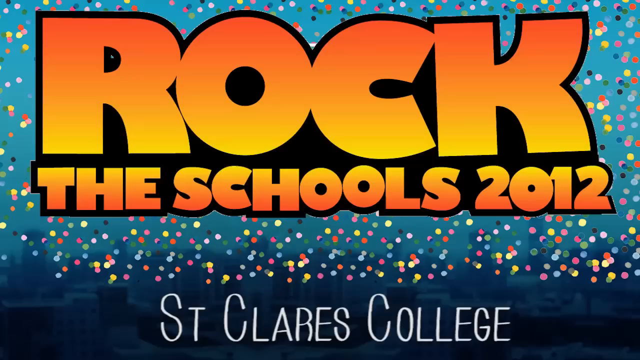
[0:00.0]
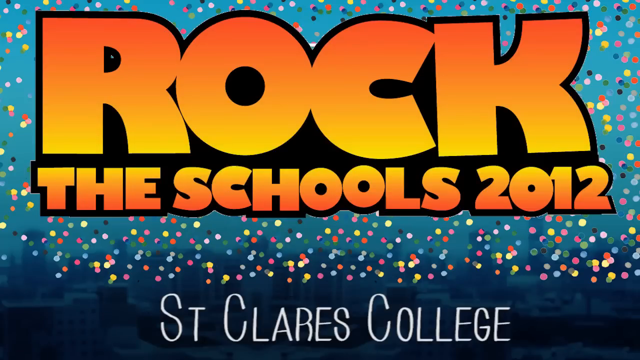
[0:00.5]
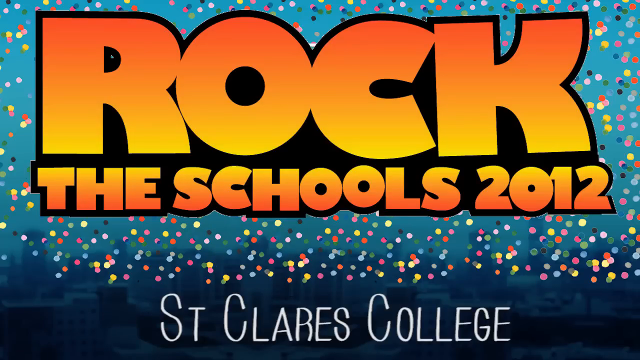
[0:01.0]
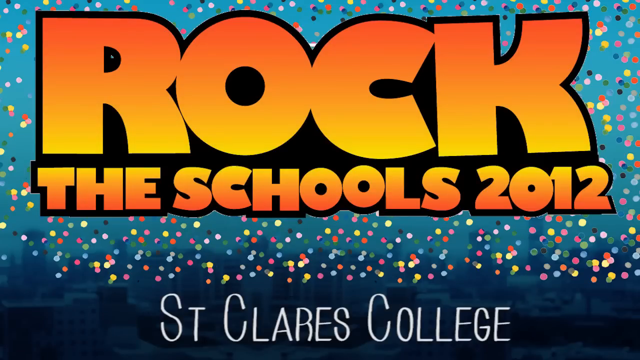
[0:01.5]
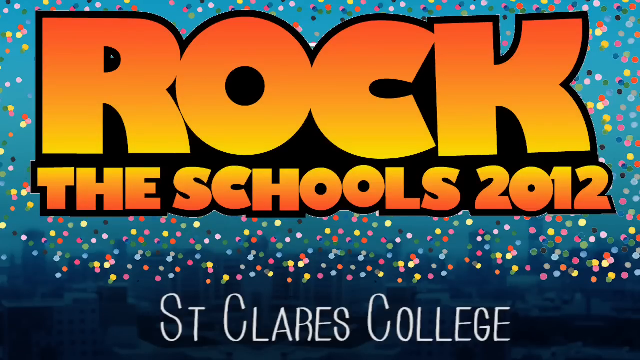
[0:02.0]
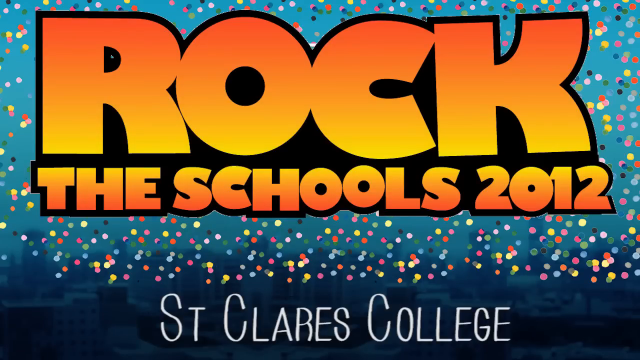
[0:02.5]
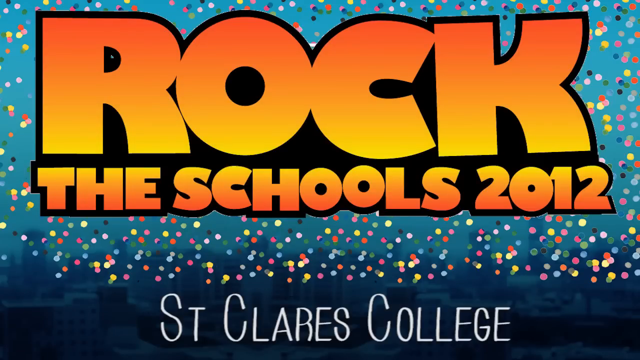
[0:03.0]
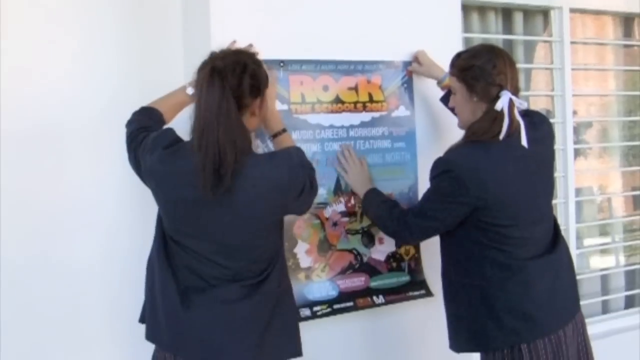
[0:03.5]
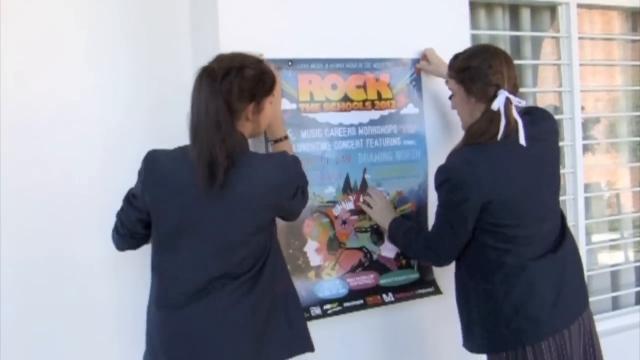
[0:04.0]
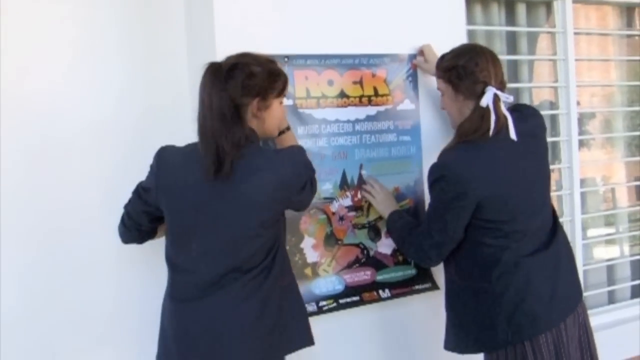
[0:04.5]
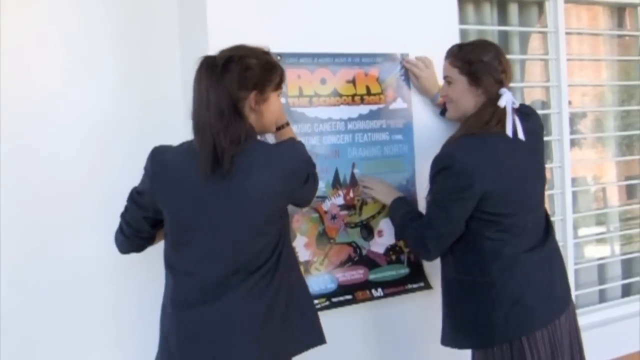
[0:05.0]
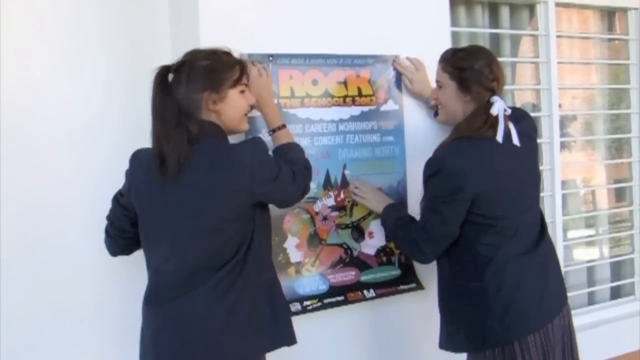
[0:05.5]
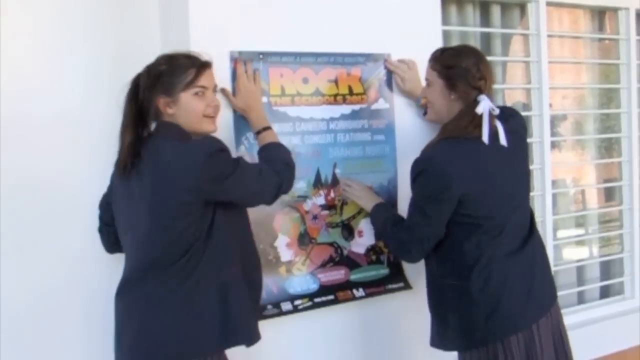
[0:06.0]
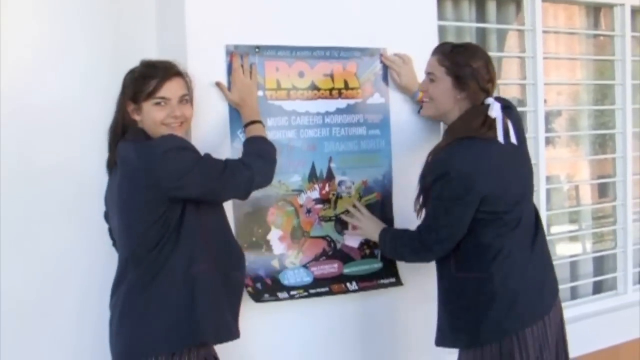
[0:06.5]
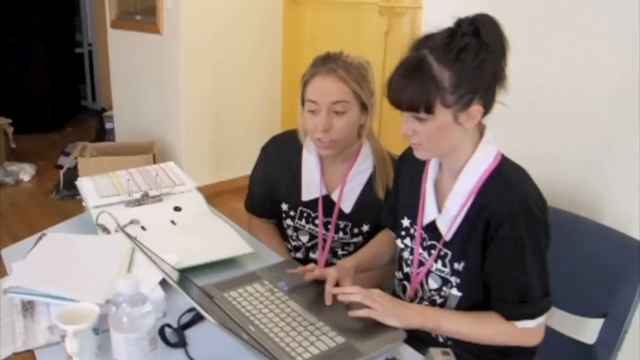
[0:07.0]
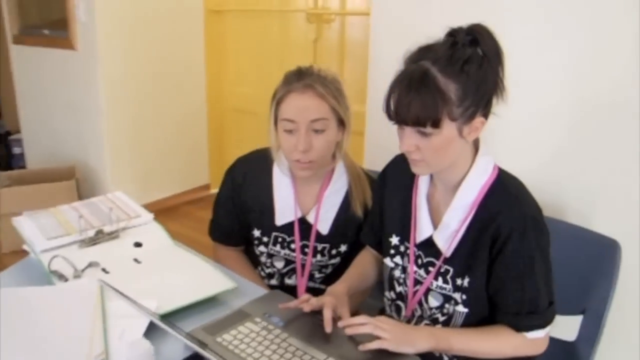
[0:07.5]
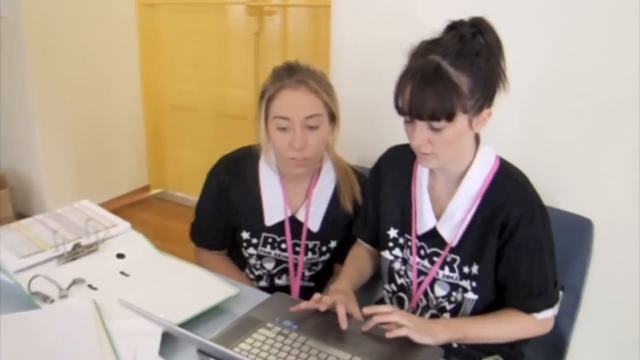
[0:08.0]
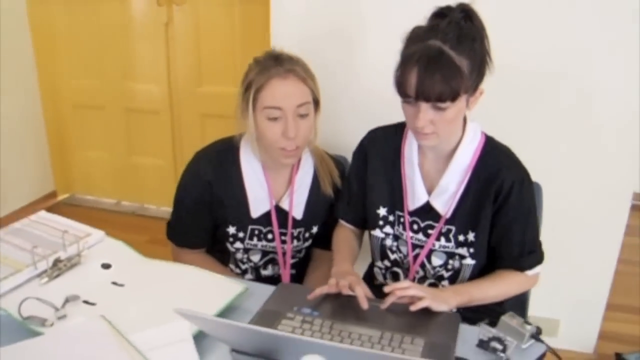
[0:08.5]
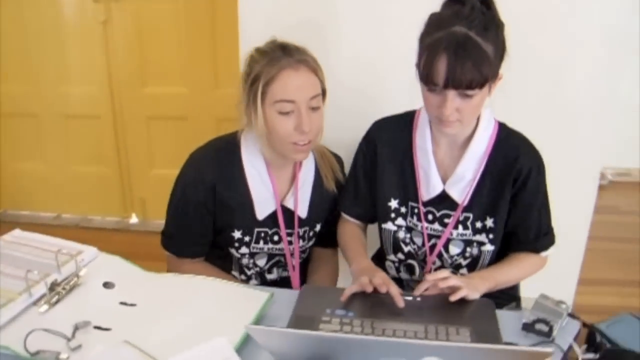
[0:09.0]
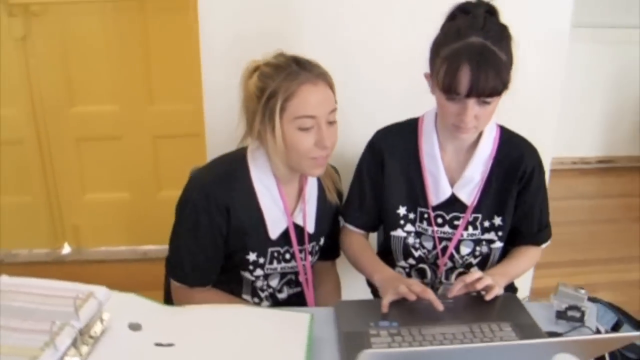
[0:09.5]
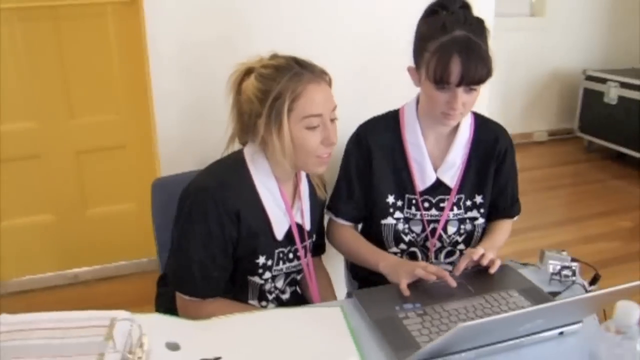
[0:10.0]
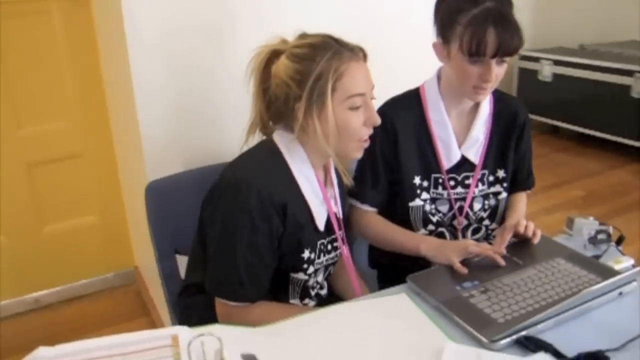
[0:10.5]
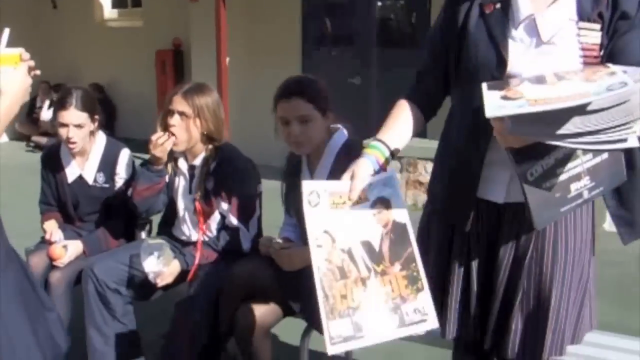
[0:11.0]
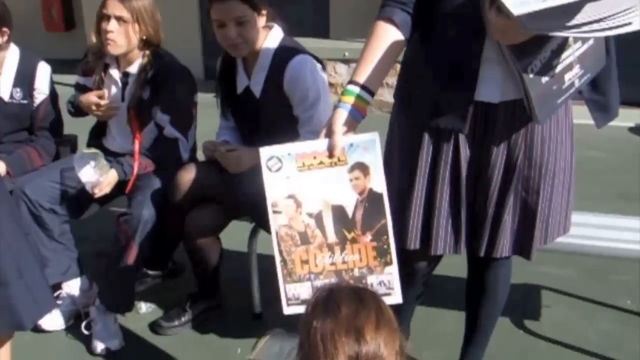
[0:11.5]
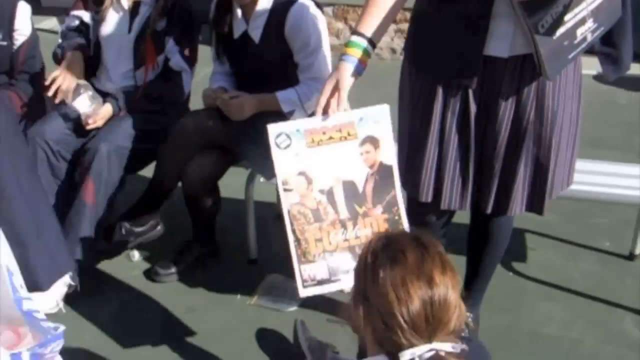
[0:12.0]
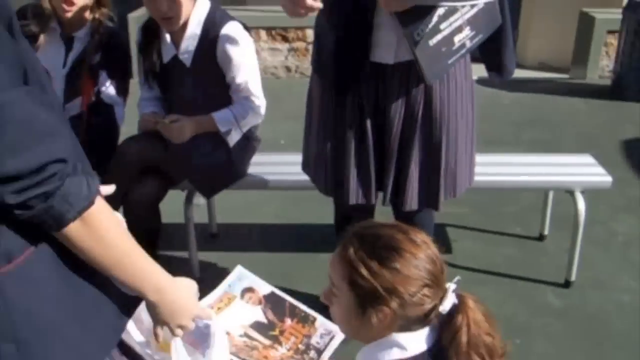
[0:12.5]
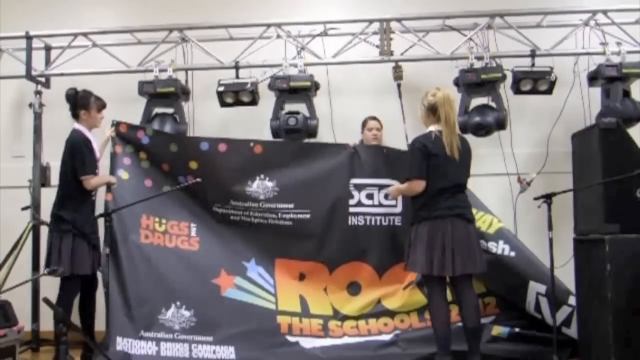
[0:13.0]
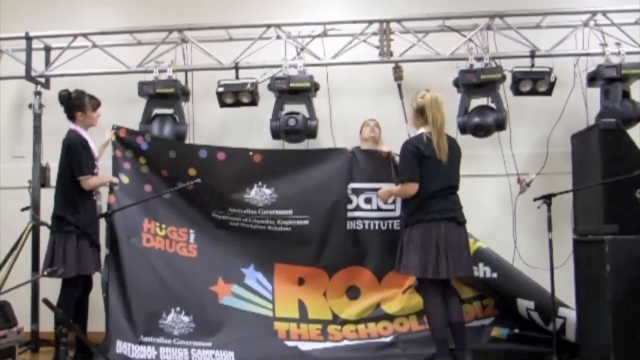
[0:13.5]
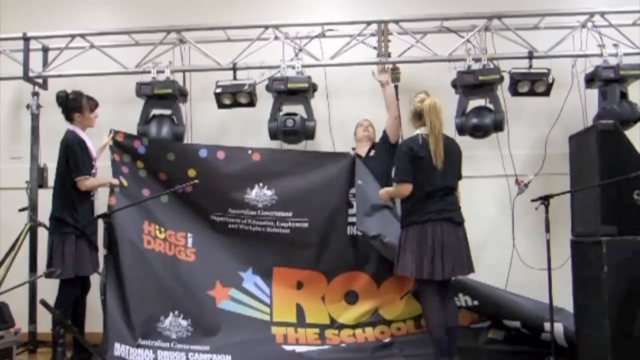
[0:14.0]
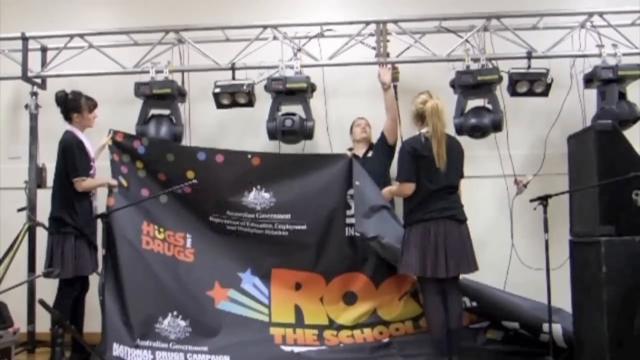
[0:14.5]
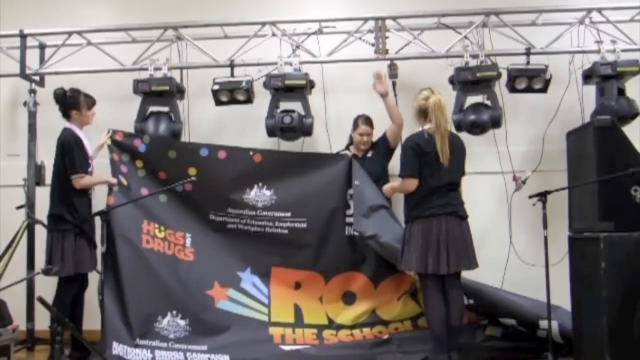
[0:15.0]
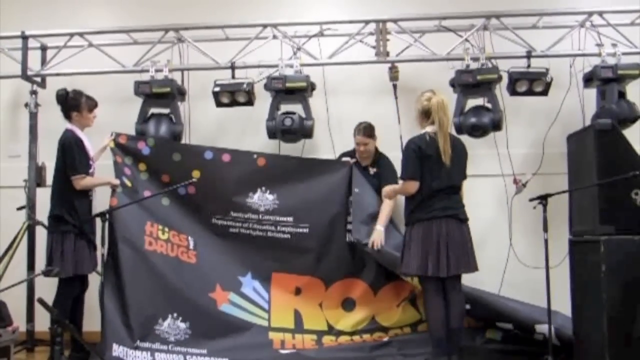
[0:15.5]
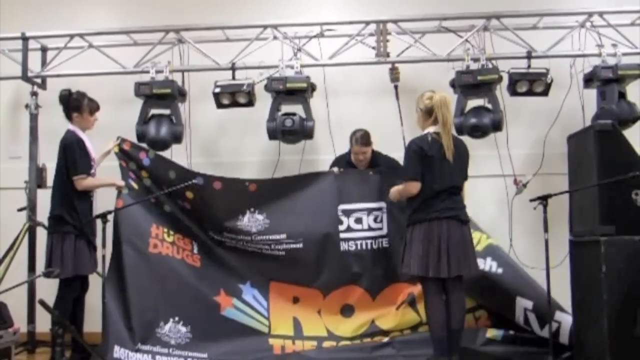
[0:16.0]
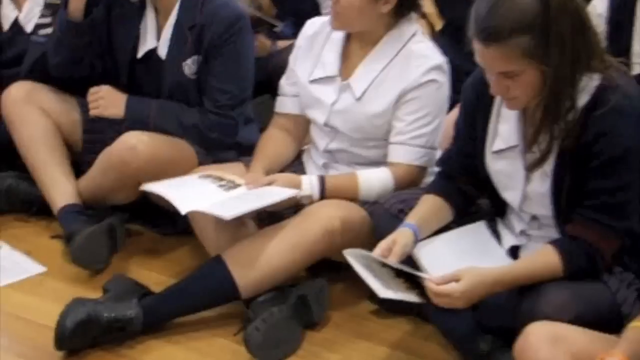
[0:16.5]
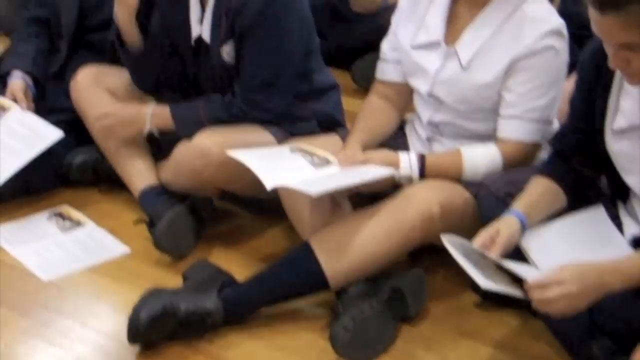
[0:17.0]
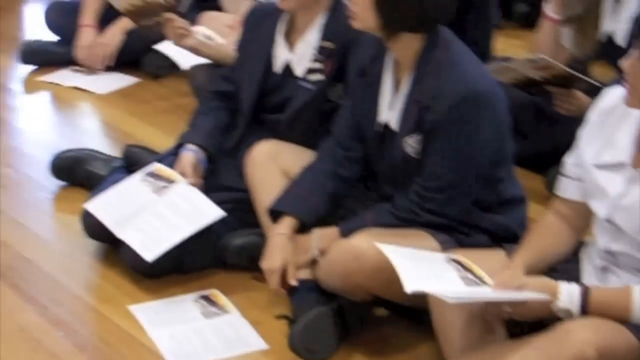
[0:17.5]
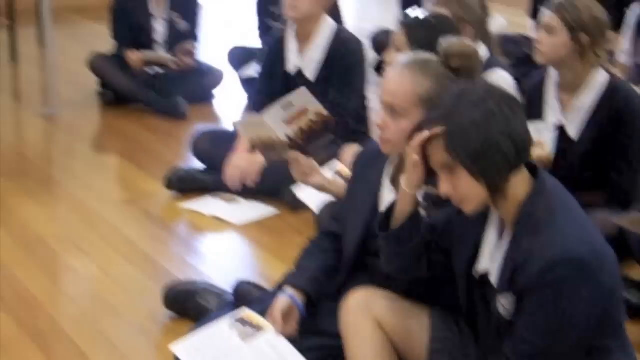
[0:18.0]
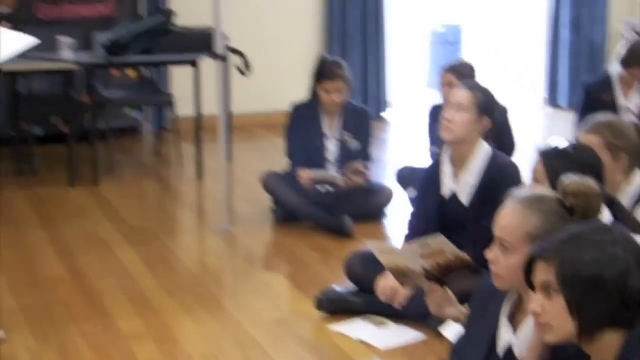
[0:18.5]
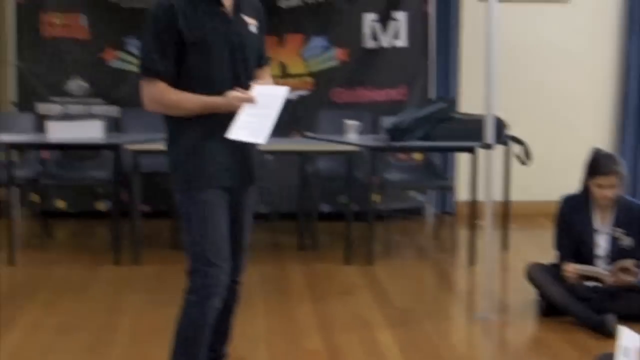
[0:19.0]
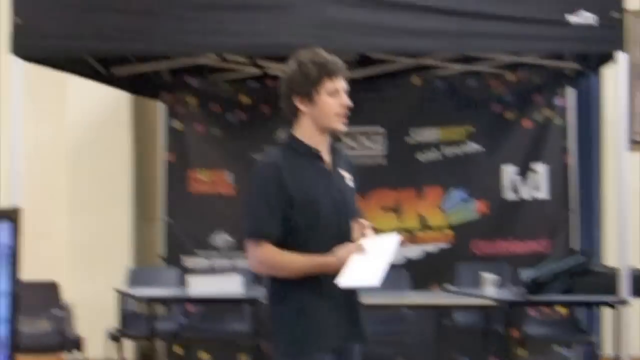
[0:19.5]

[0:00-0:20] A slide at the front reads "Rock the Schools 2012," and below that "St. Clares College." The slide's background looks kind of party-like. Next, two young women in sort of gray shirts hang up a poster together that reads "Rock the School 2012" and has some graphics on it. The woman on the right has a white ribbon in her hair holding her braid or hair back; the woman on the left does not. Further down in the image, two other young women face the camera. The one on the right is using a laptop or some sort of computer, typing something into it, while the one on the left looks on. Both wear pink lanyards and black t-shirts that say "Rock 2012" along with some other things.